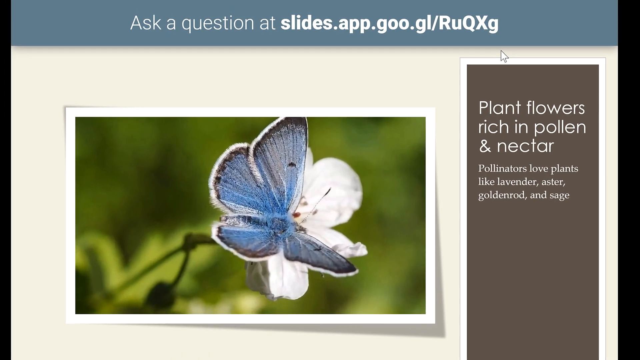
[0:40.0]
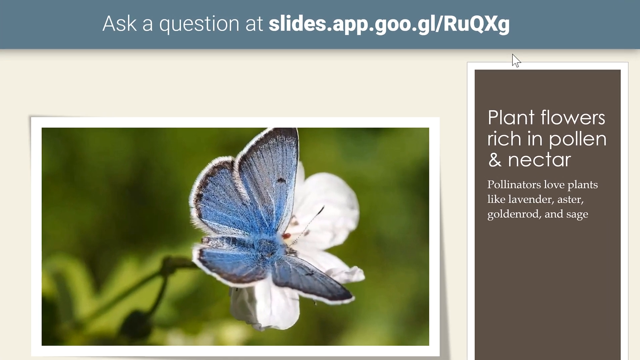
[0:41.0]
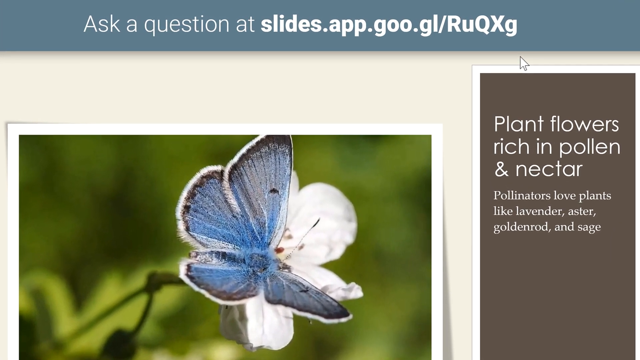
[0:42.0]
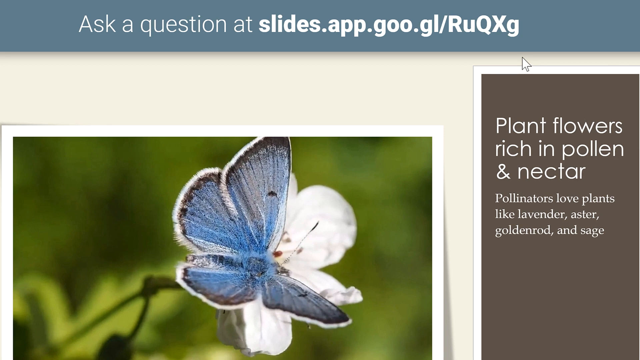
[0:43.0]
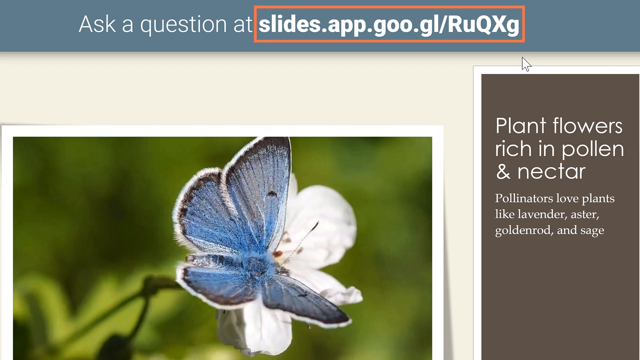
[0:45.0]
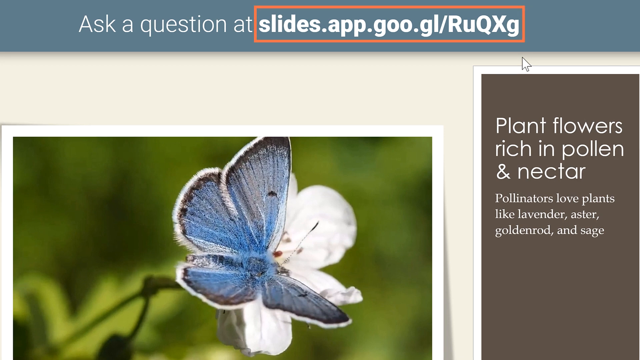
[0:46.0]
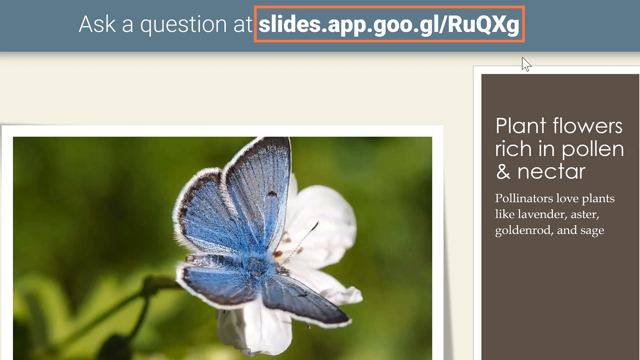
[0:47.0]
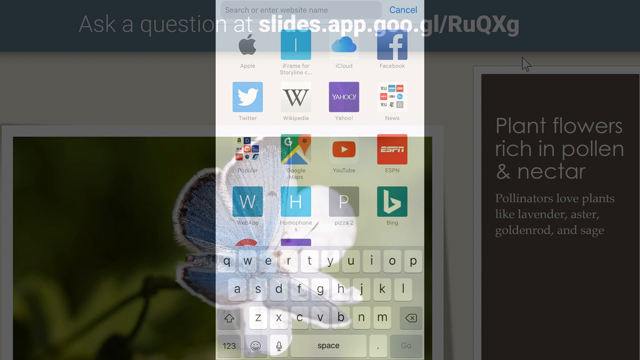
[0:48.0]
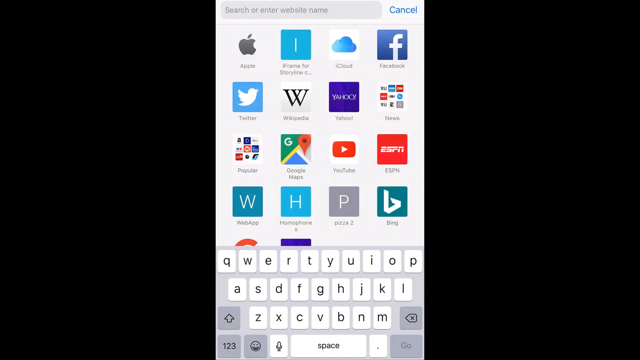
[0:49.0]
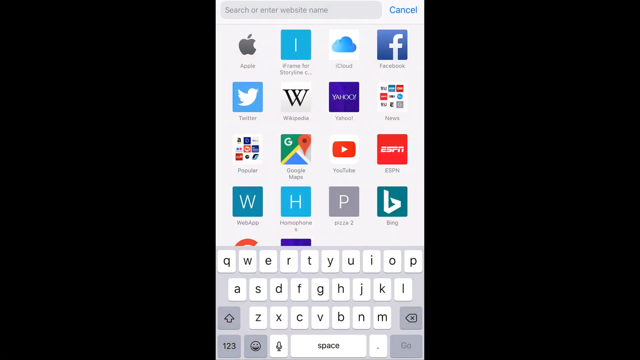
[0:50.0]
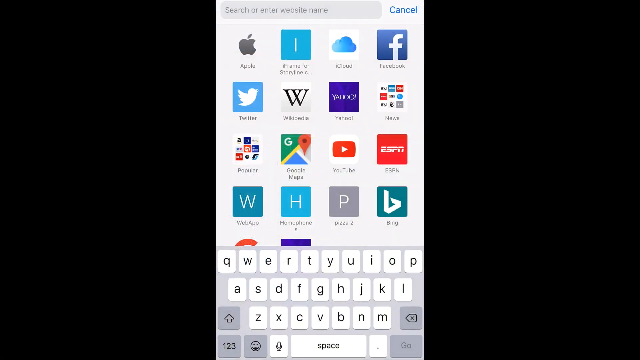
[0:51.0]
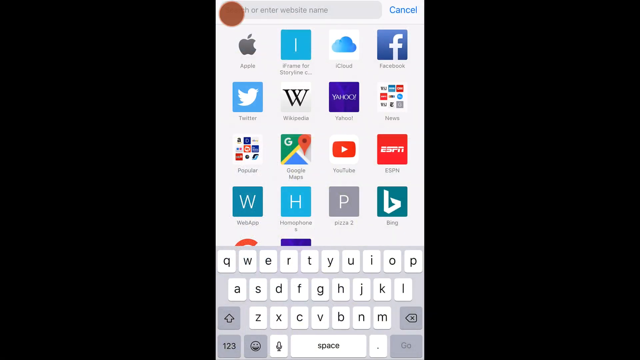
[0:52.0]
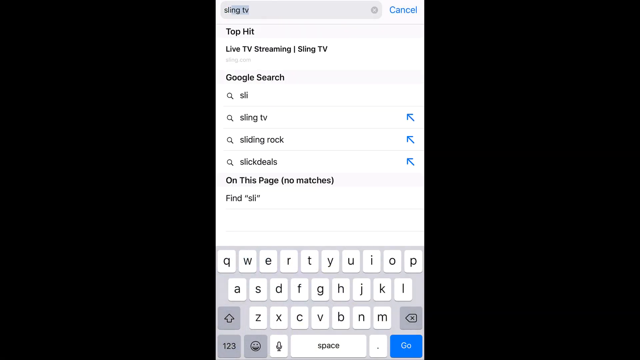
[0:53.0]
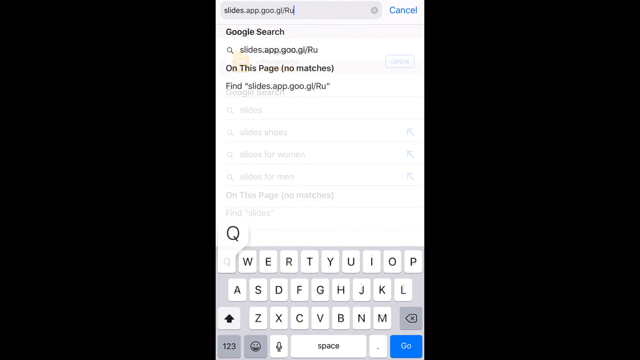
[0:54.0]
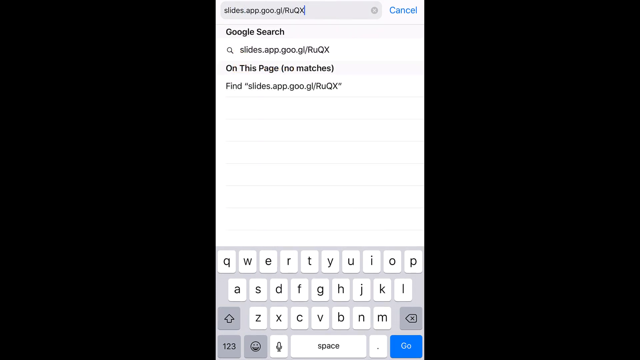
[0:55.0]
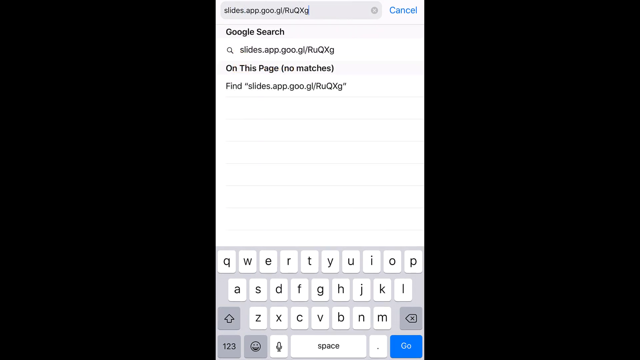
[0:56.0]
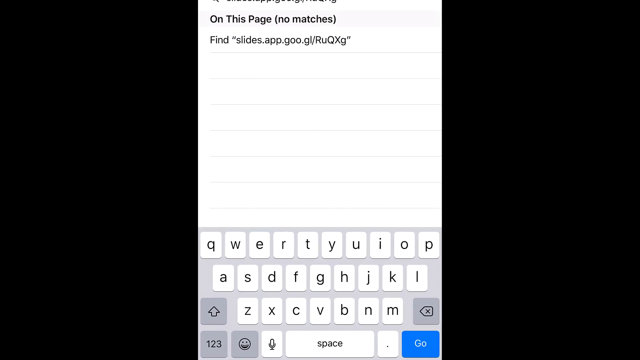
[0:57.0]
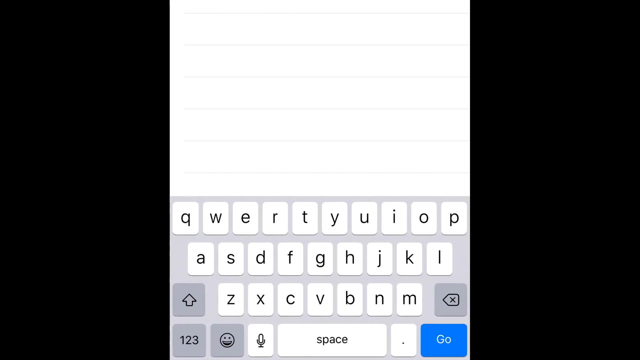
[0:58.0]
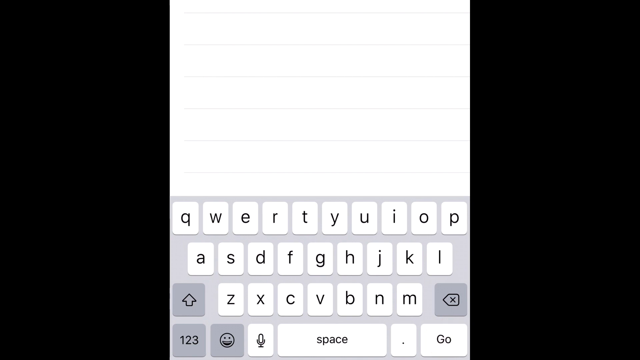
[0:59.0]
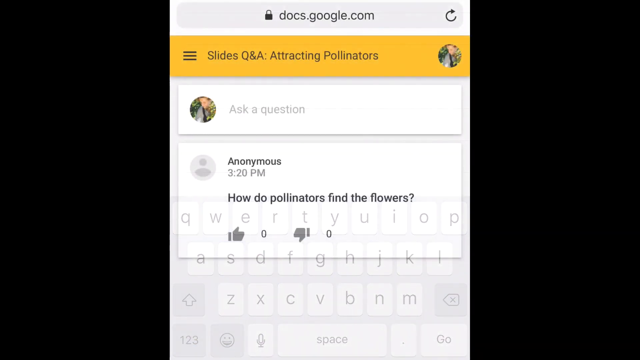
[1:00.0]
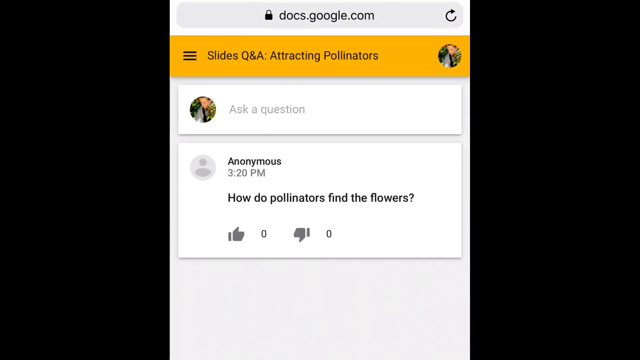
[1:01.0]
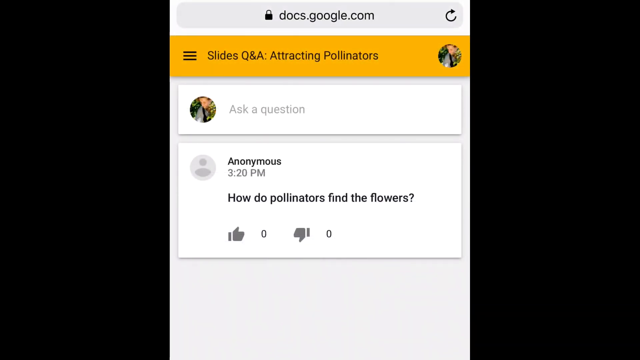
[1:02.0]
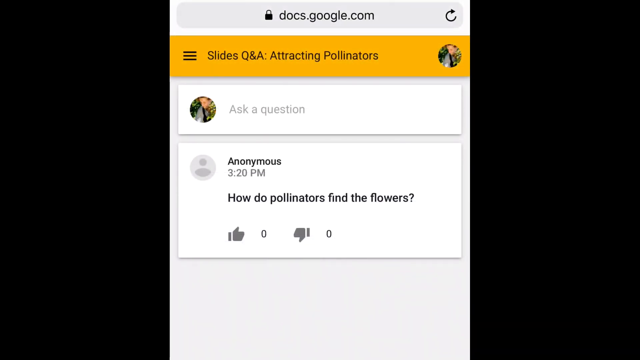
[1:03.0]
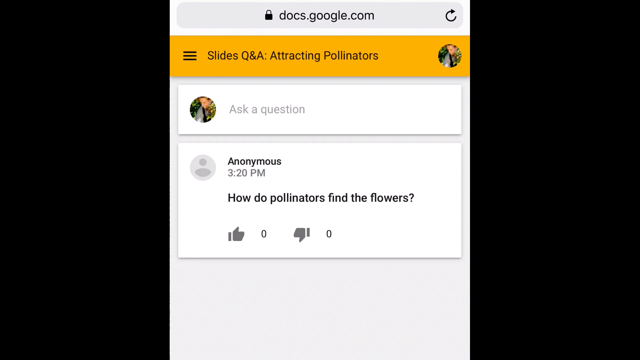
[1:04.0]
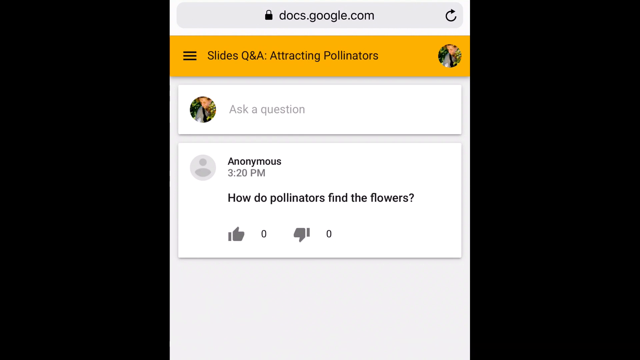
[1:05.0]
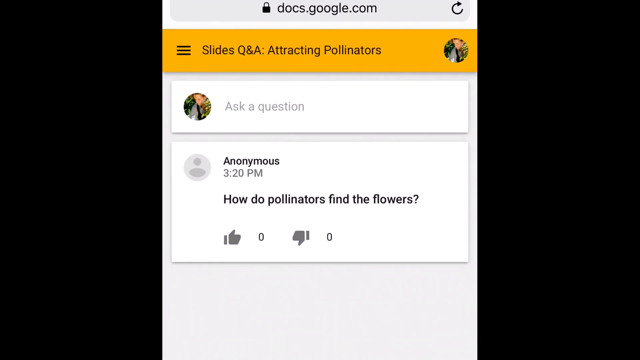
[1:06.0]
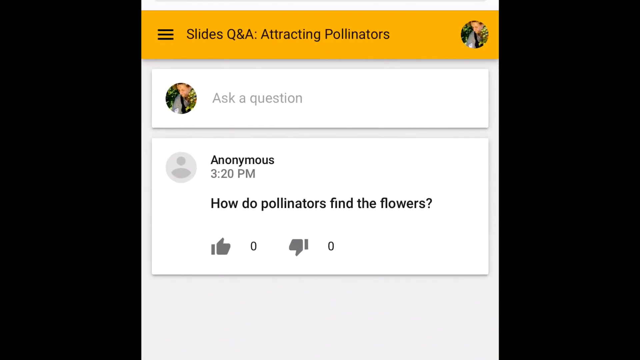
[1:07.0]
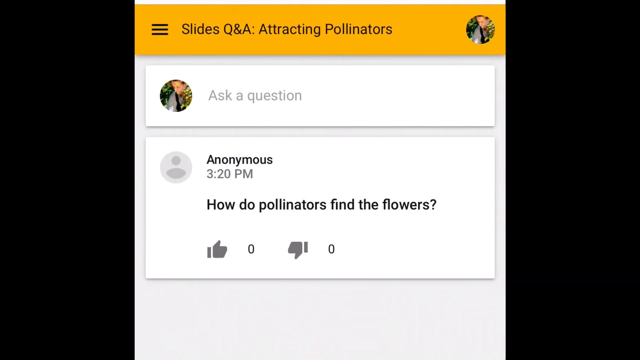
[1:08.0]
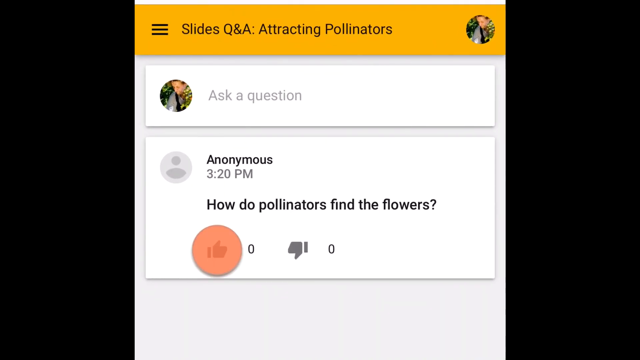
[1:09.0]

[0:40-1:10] The presentation screen has a gray background with a photo-like space showing a little butterfly sitting on a white flower against a green background. In the vertical rectangle on the right, "Plant flowers rich in pollen and nectar" is written, and at the bottom a blue band states "Ask a question at slides.app.goo.gl/RuQXg". The slide zooms in and the link slides.app.goo.gl/RuQXg is marked with an orange rectangle. The screen transitions to a mobile screen with apps and a keyboard at the bottom and a search bar at the top. The slides.app.goo.gl link is typed into the search bar, the virtual keyboard is zoomed in, and enter is pressed. docs.google.com opens, showing the slides Q&A attracting pollinators page, where an anonymous user has commented "how do pollinators find the flowers?" That section is zoomed in and the like button below the text is clicked.